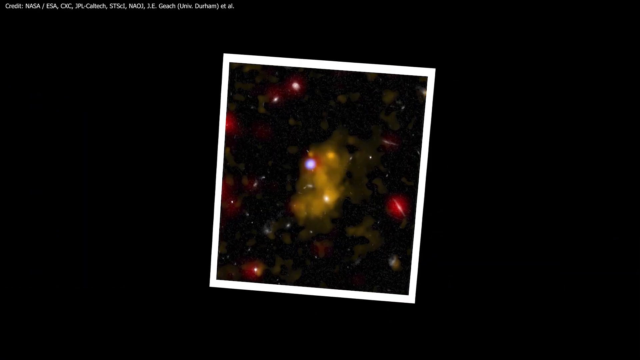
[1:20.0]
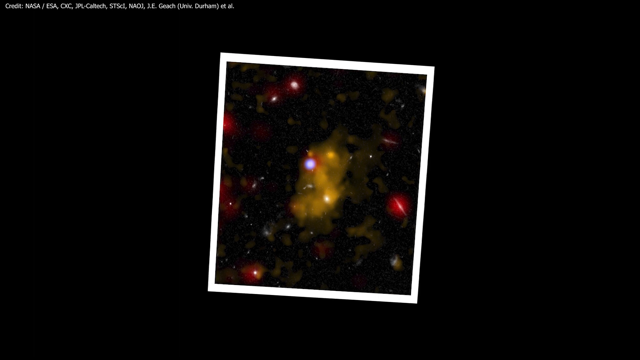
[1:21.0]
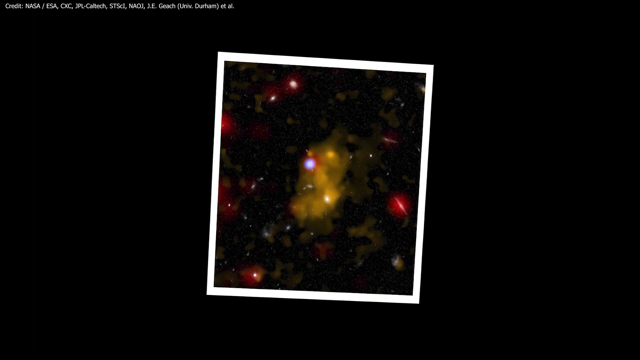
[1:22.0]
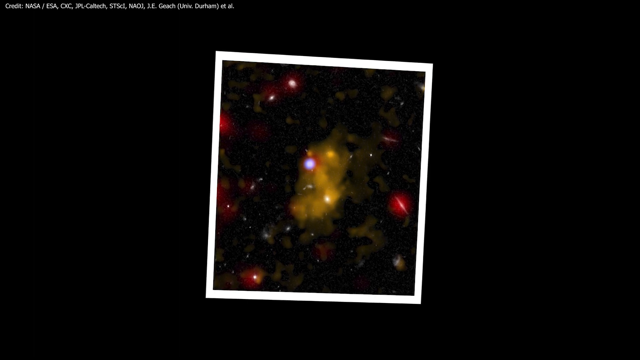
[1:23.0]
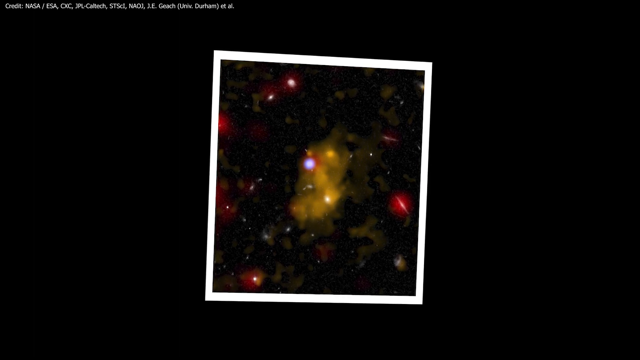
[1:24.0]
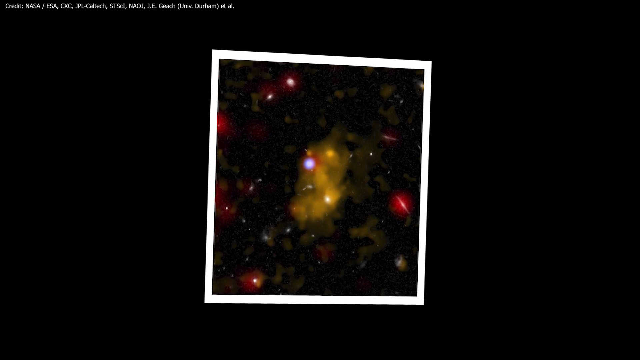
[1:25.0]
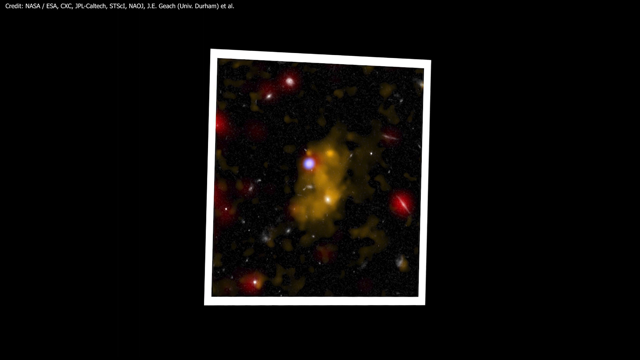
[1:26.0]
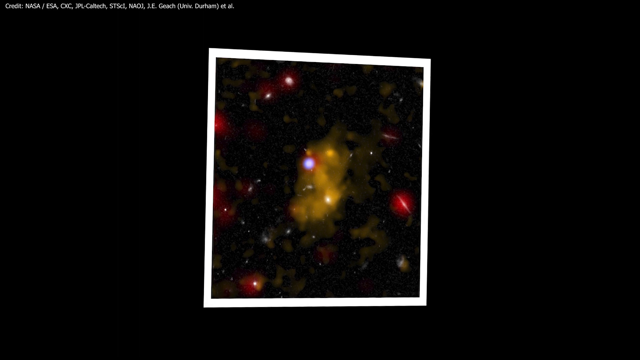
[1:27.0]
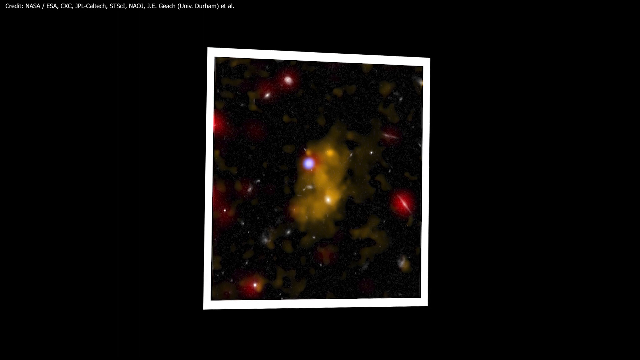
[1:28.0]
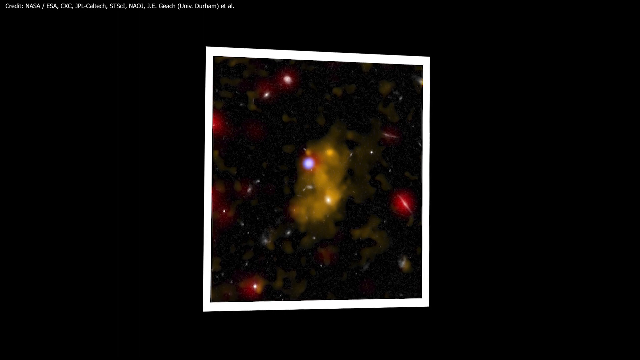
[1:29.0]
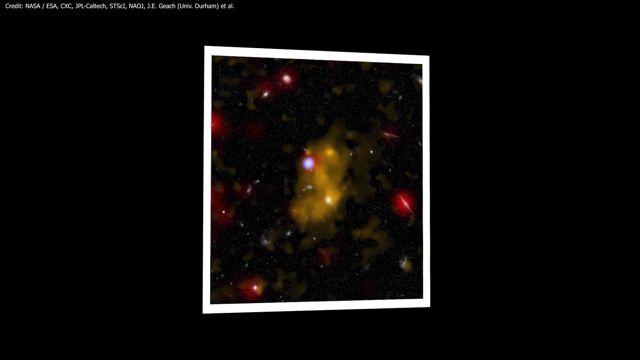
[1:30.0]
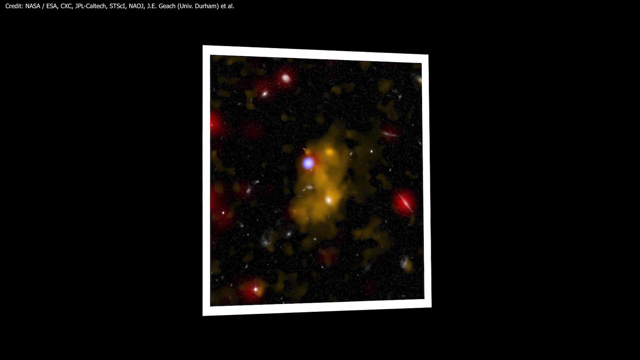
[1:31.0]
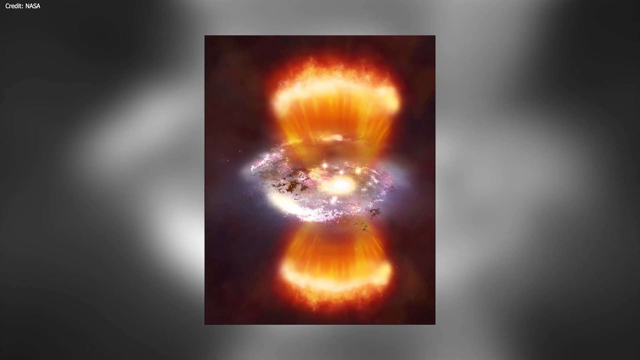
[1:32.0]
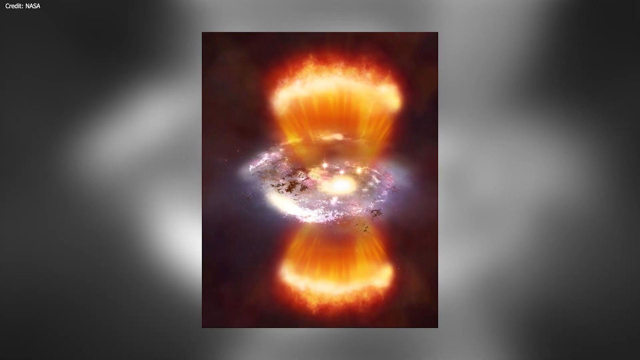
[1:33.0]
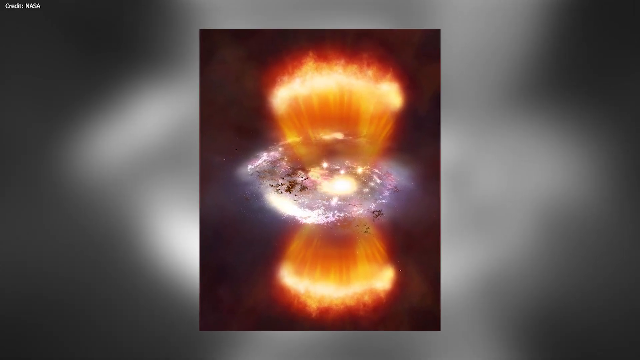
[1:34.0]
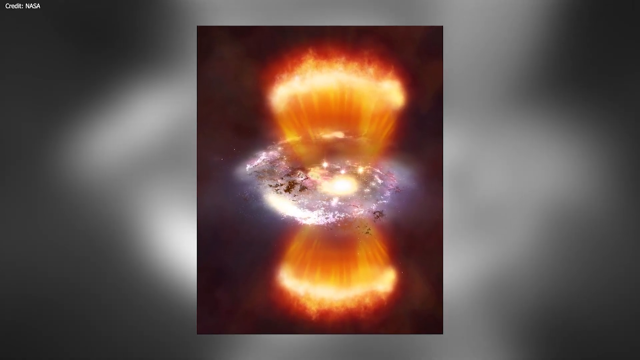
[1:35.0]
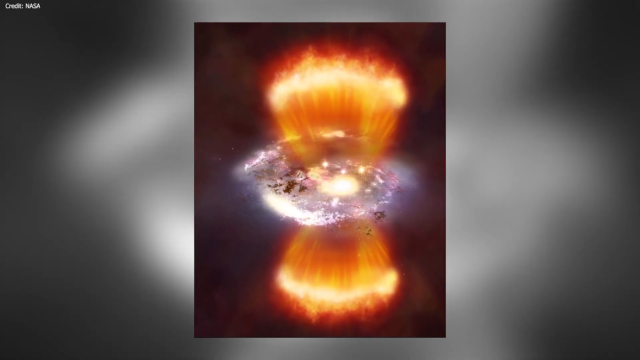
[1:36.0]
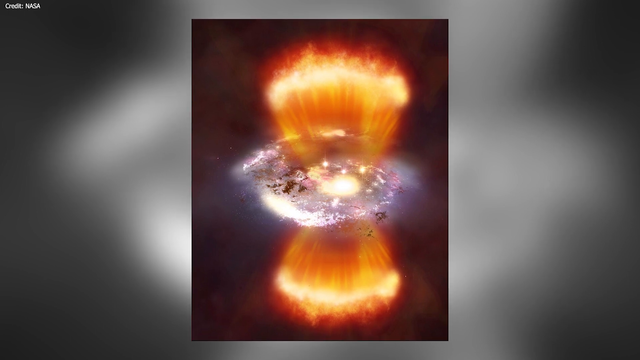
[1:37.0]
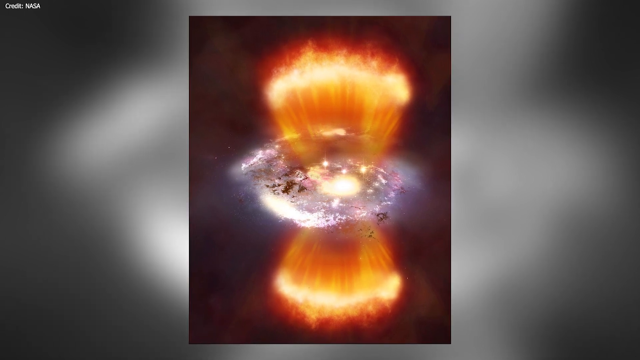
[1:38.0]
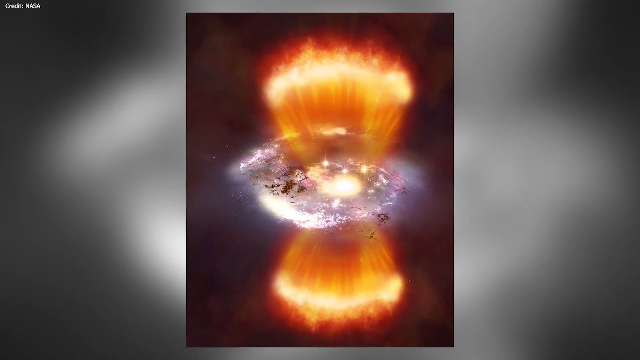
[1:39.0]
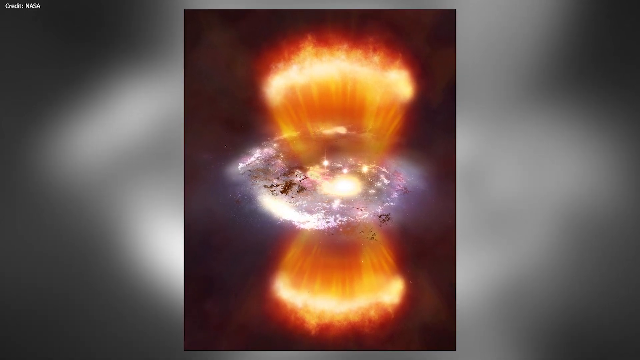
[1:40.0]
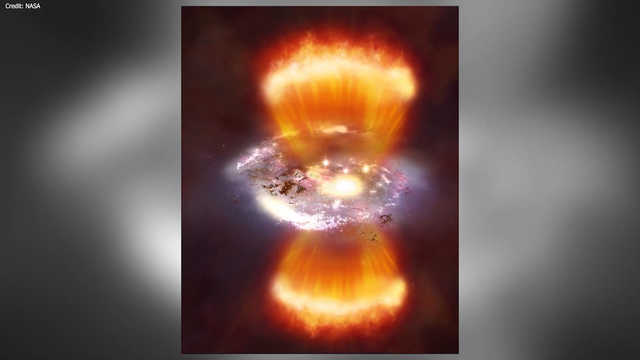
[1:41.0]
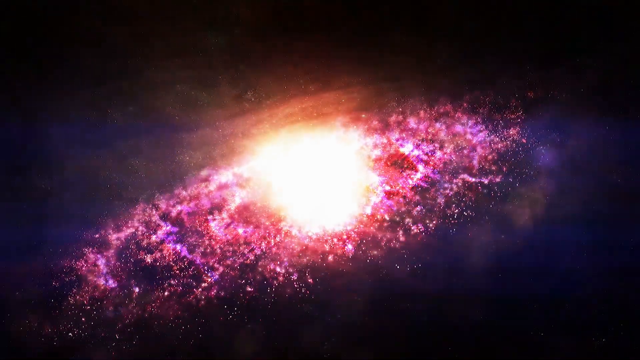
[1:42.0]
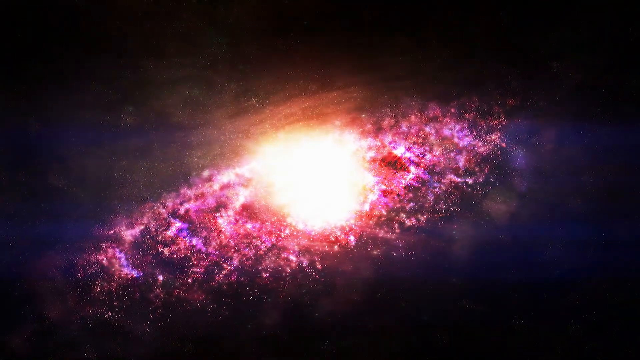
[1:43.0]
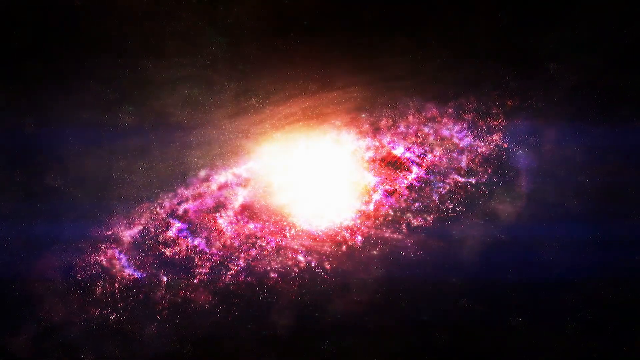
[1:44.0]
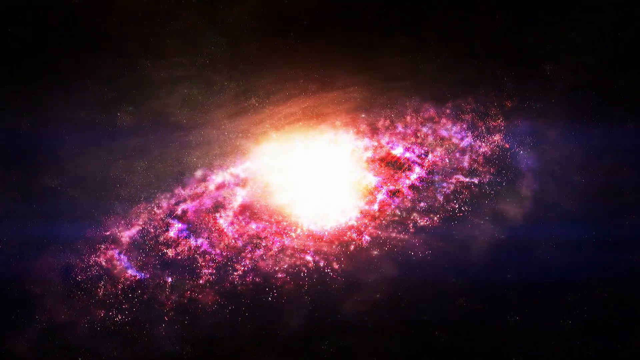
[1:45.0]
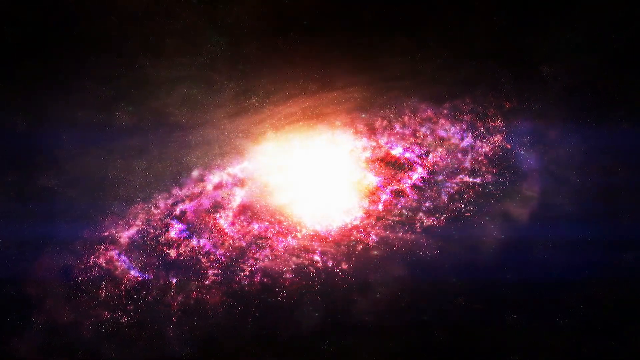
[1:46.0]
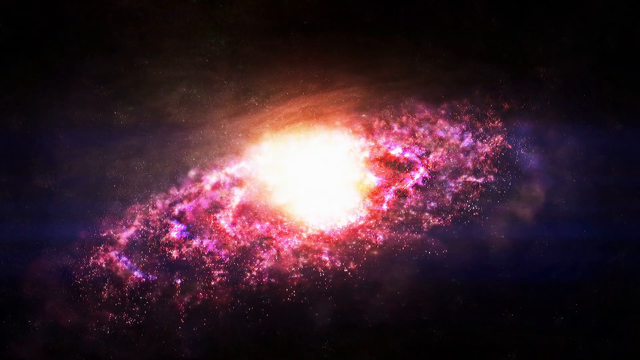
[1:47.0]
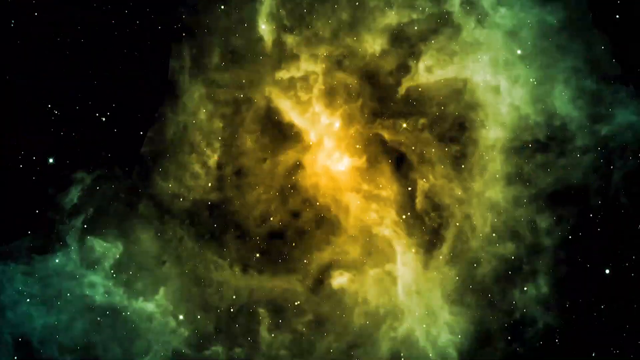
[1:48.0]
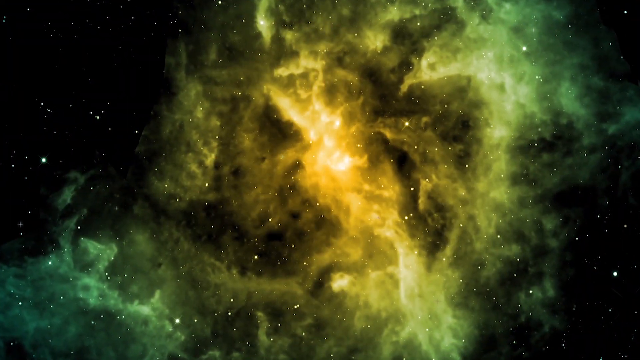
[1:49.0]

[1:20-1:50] A Polaroid picture shows a black, yellow, red, and purple galaxy scene with many gaseous bodies and bright illuminated specks within a framed picture. It then changes to another picture that almost looks like a large event such as the Big Bang. In the middle of the screen is a rectangle, maroonish on the inside, that contains the whole scene; outside the rectangle is a blurry gray background. Within the rectangle is a large maroon sky, and toward the middle is a spiraling galaxy with yellow, white, purple, and blue colors in a ring. Extending from either side of it in an hourglass shape are large fans of what looks like red flames, almost like a broom head made of individual strands of fire extending above and below the large yellow circle in the middle of the galaxy or solar system. On the outer edges of the broom head it gets more intense, with an additional layer of fire. Toward the outsides is a gradient of black and maroonish color that looks like energy and smoke coming away from the explosion. At the very end, the video moves to a more dynamic visual of a purple solar system spinning around, and then briefly a close-up on a yellow gaseous body.